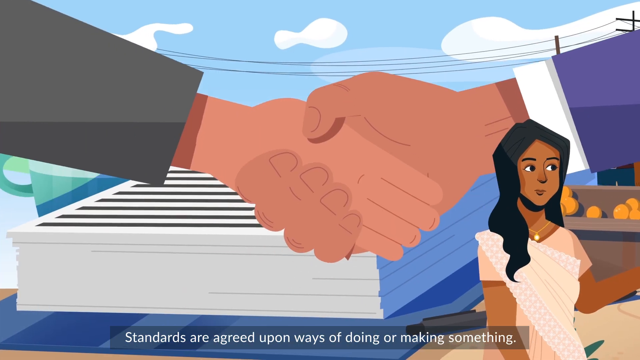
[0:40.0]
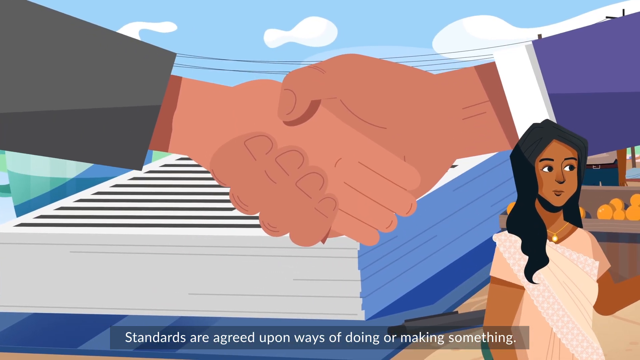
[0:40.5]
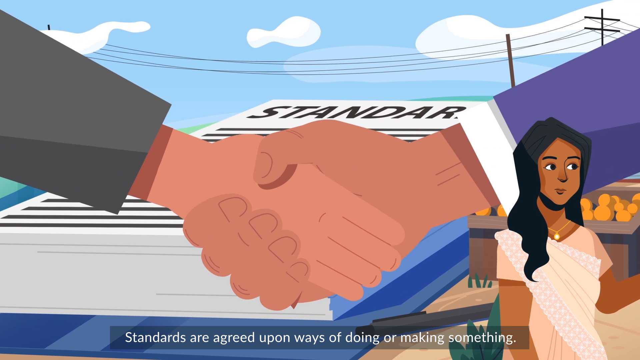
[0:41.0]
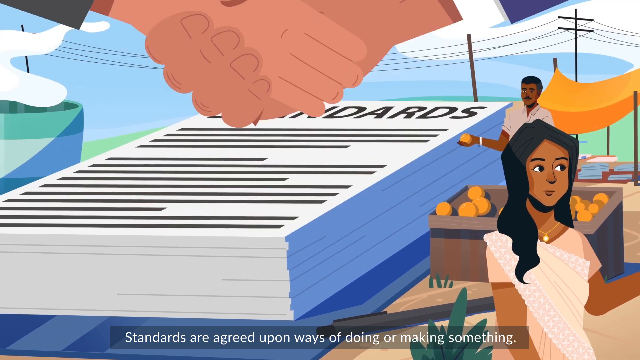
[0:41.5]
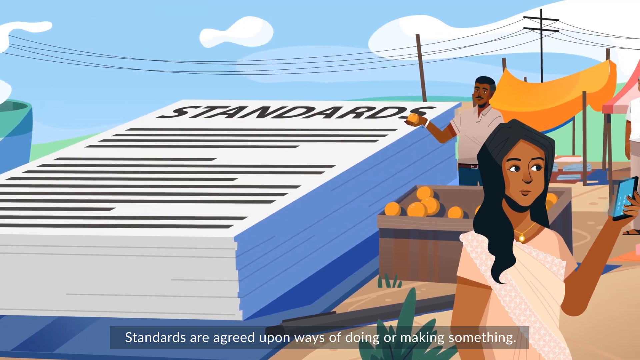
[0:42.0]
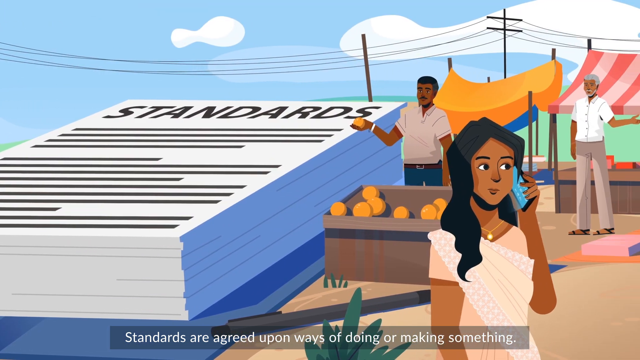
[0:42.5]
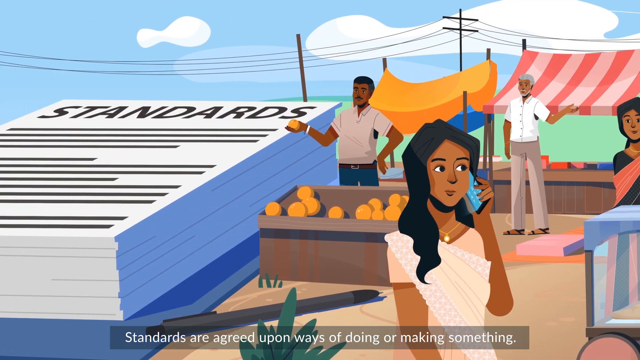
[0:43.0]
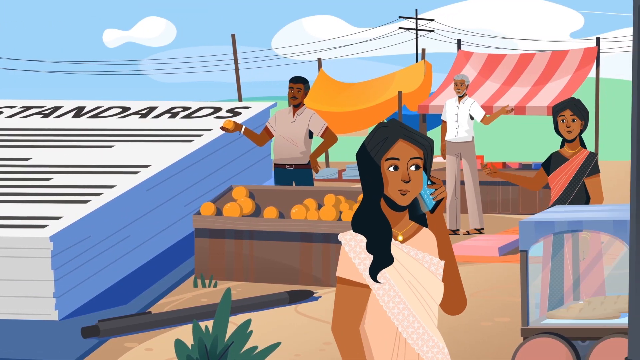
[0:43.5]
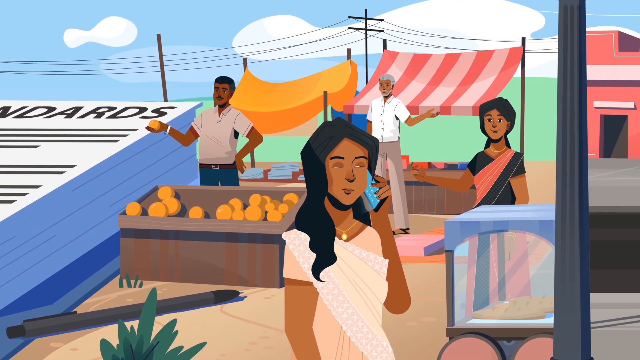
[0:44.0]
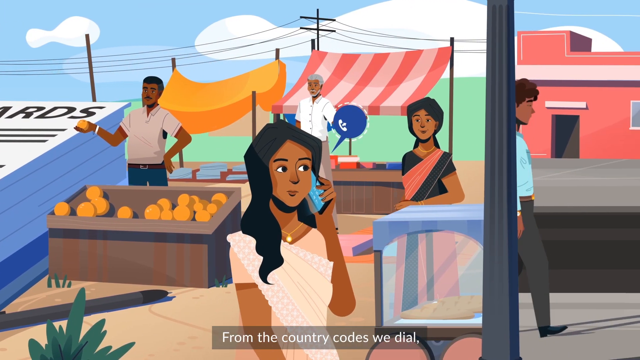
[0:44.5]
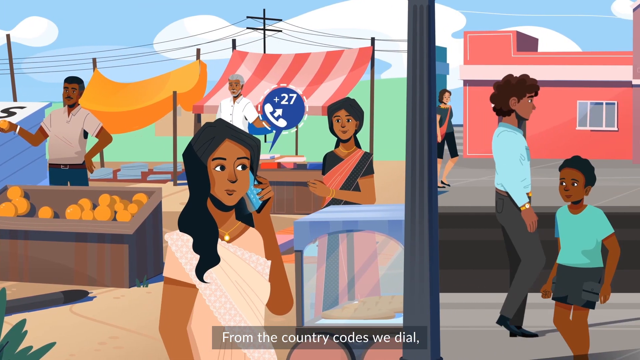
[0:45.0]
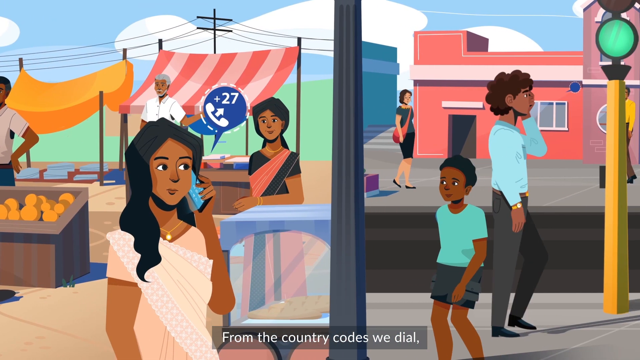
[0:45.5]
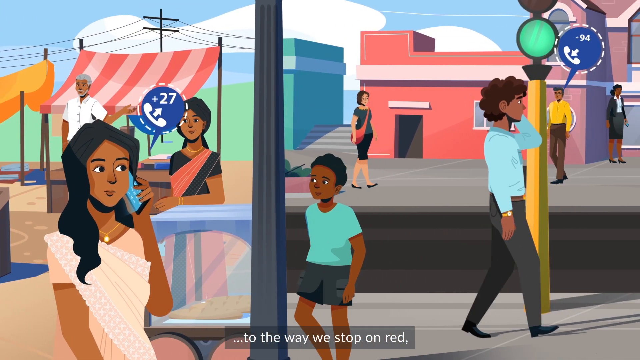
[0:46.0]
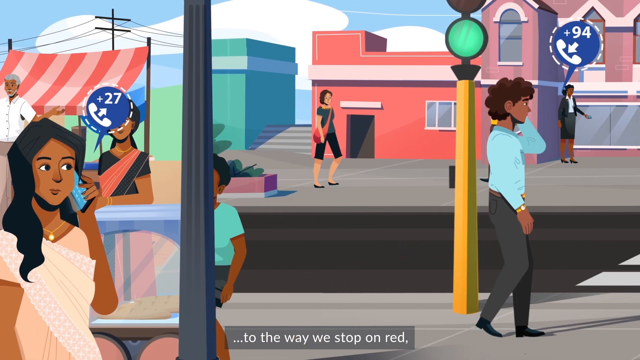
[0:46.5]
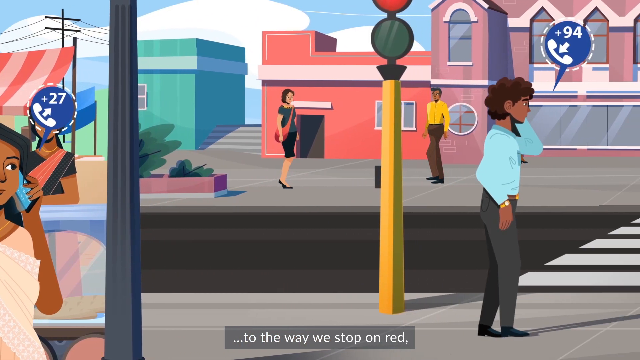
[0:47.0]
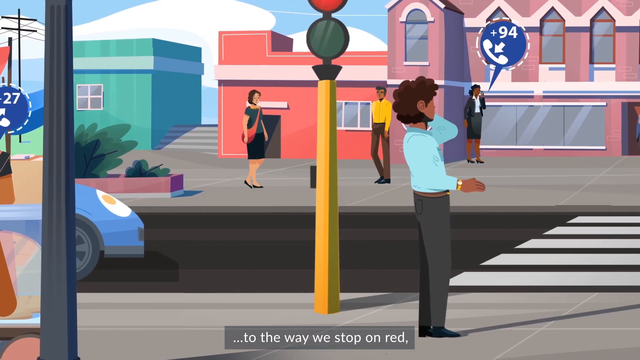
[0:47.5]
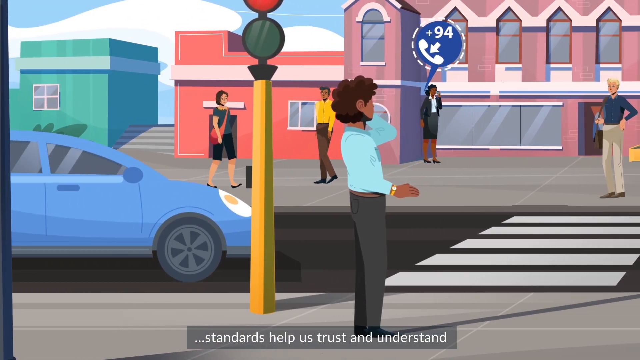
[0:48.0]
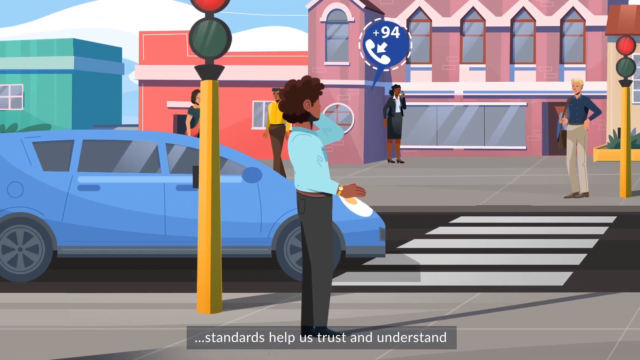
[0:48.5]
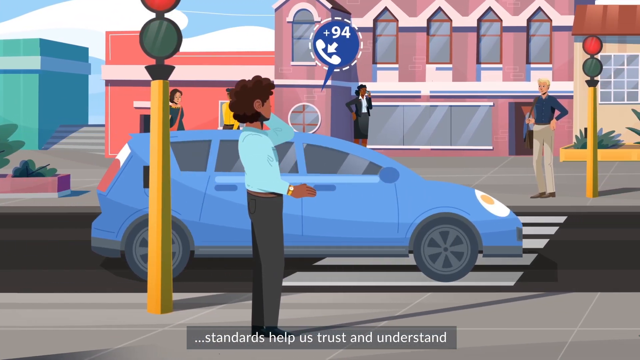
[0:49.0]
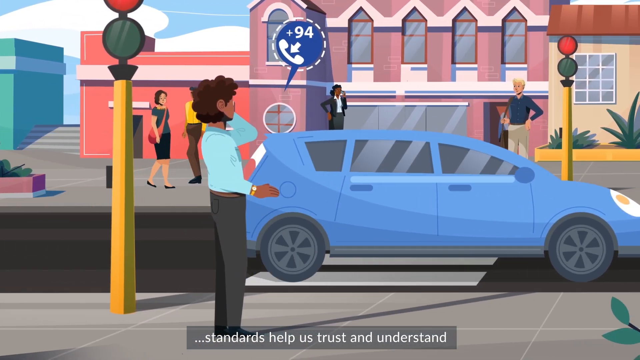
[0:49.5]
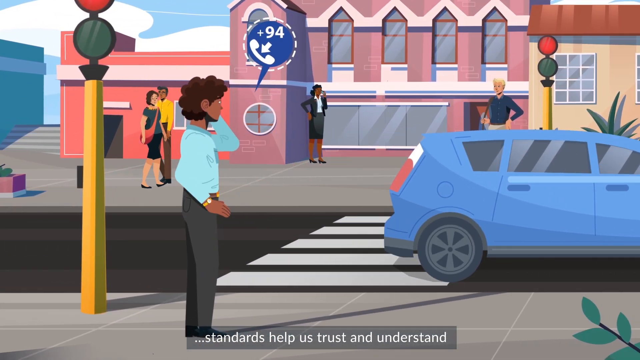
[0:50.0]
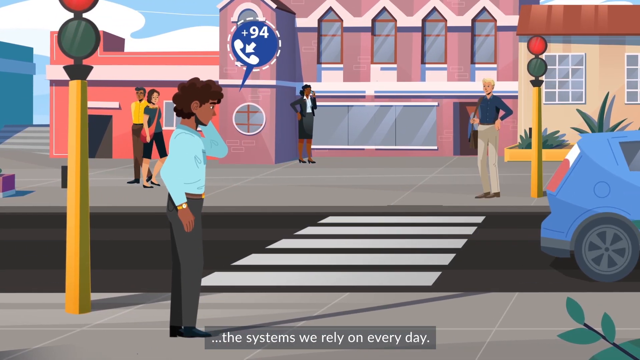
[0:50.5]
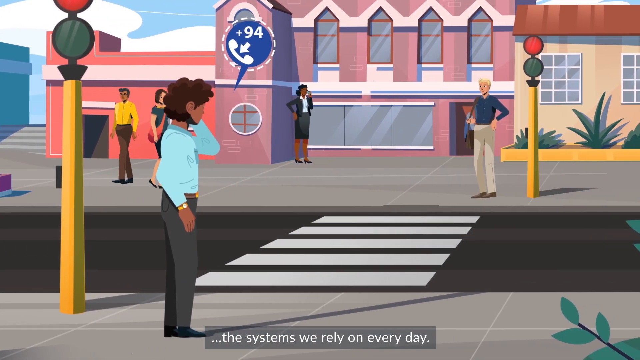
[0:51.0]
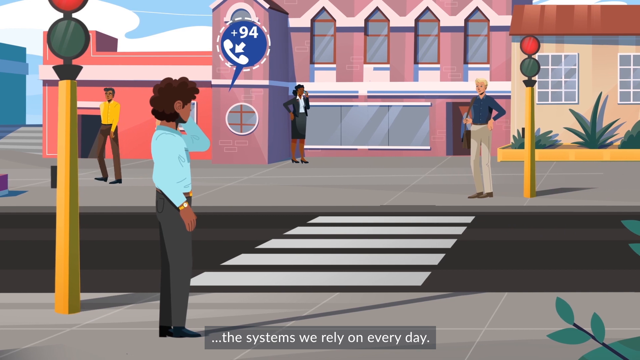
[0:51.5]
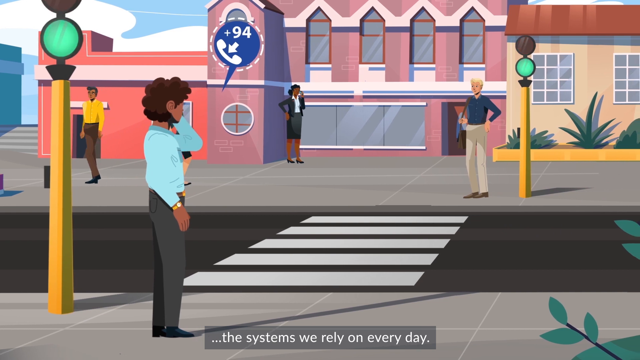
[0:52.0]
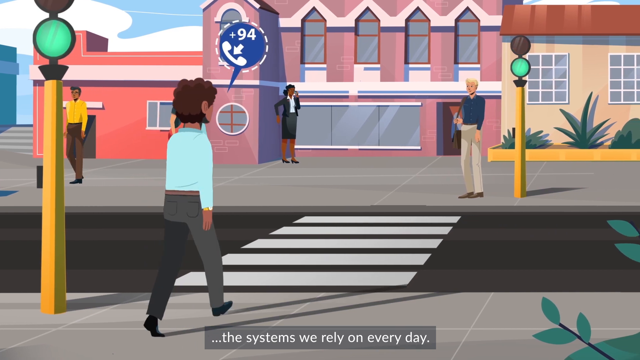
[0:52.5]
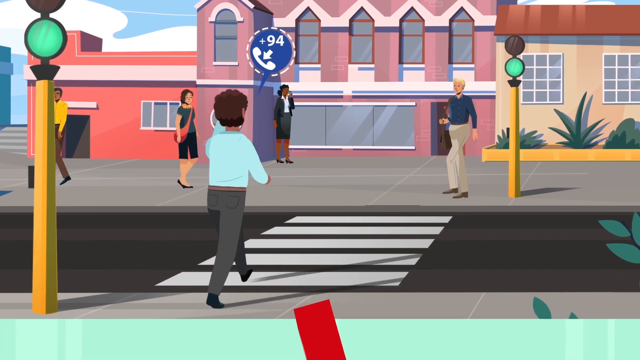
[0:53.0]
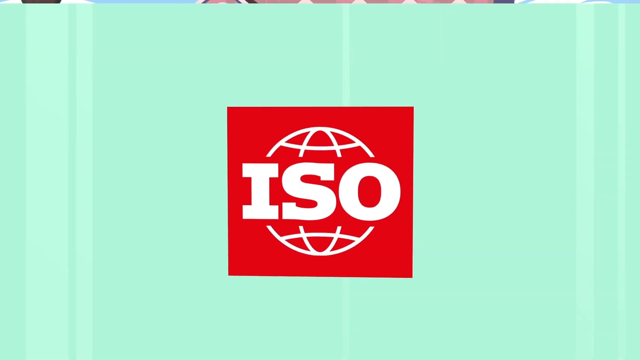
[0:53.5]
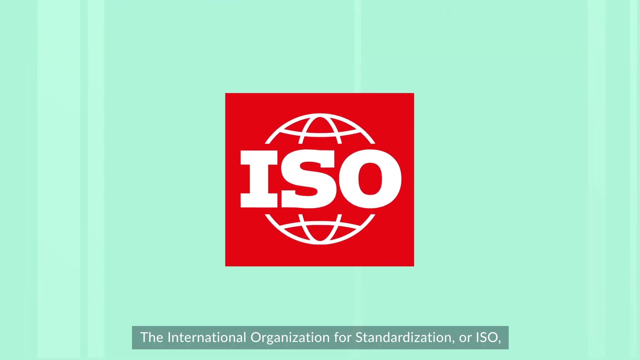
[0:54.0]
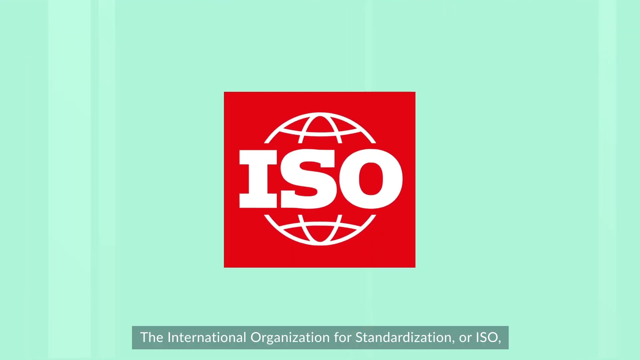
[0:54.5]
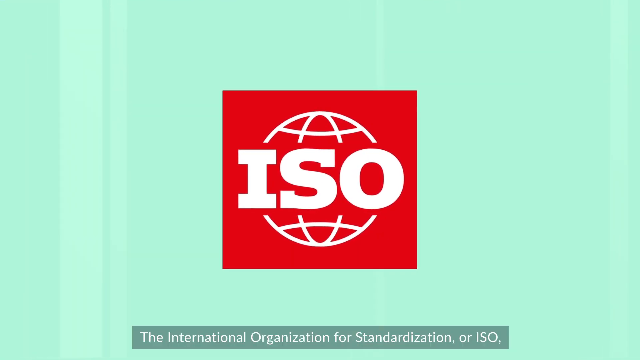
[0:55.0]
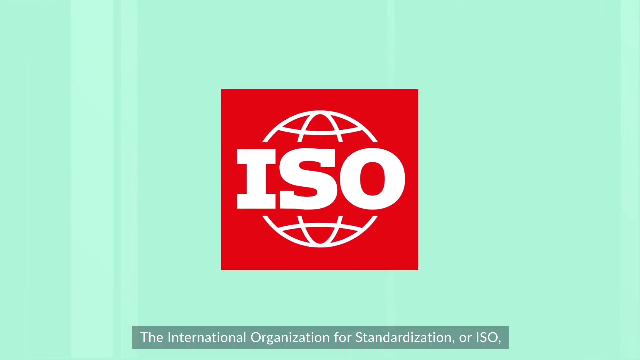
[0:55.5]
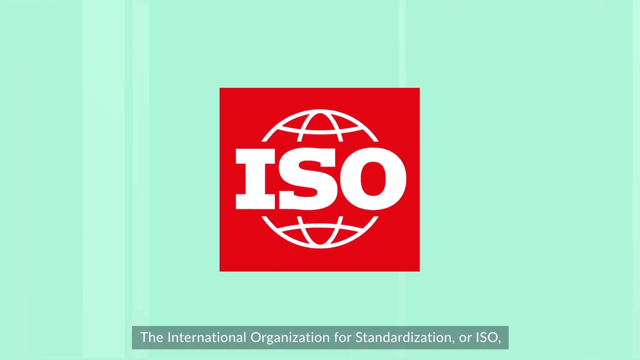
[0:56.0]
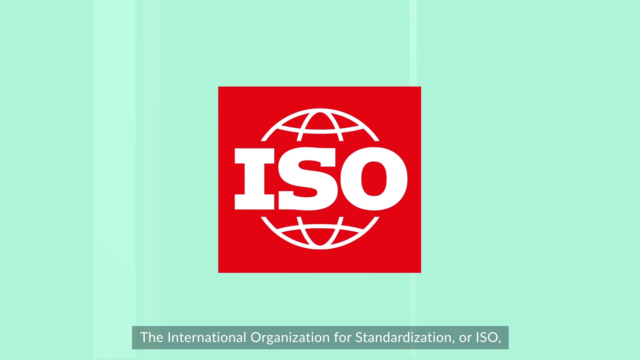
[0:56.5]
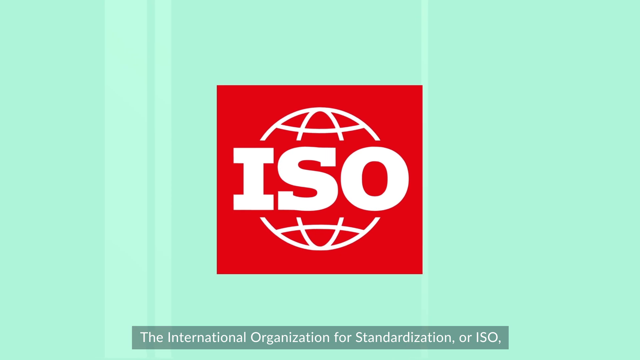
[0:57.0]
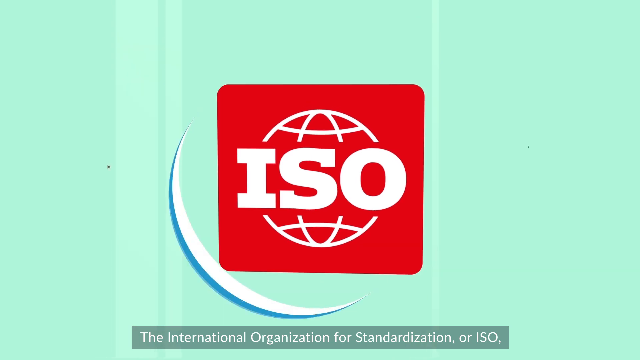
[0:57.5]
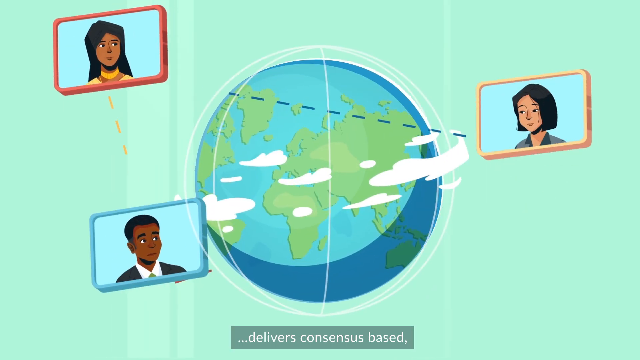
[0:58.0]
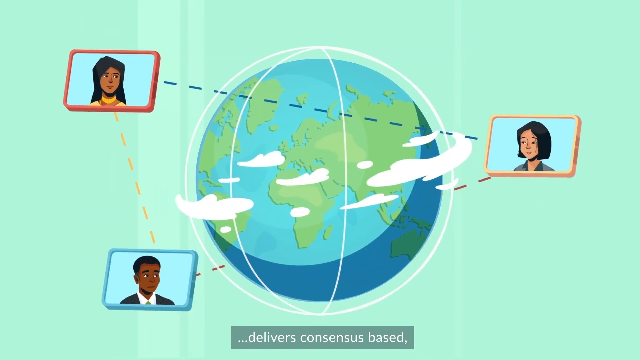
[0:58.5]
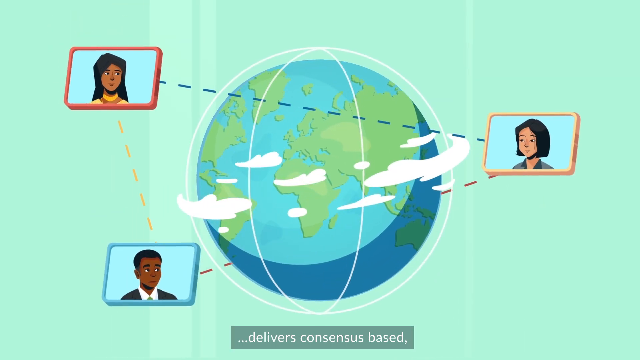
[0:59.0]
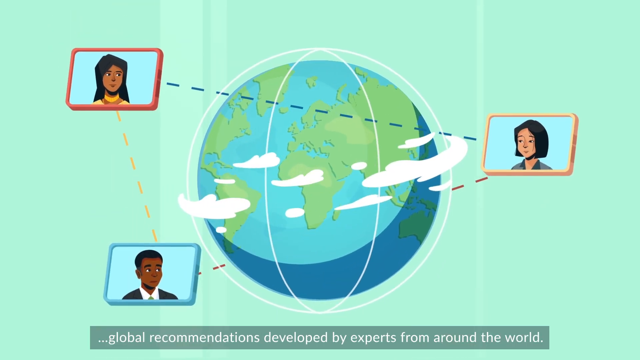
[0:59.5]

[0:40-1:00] A boy plays with a ball, and the ball goes straight into the sewage. He tries to pick it up and seems about to touch the ball with his hand. People are moving around, a young lad wants to cross the road, and there are cars.